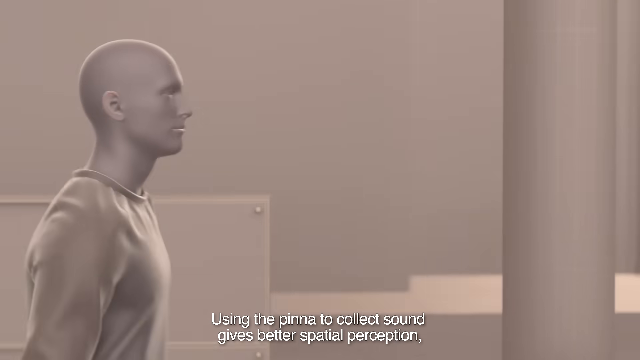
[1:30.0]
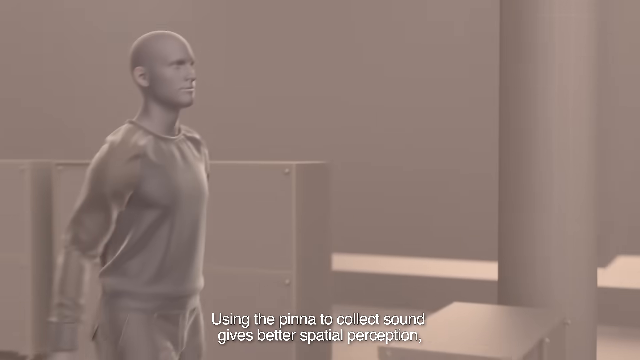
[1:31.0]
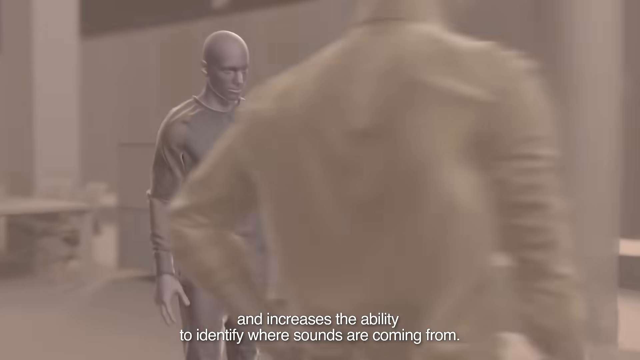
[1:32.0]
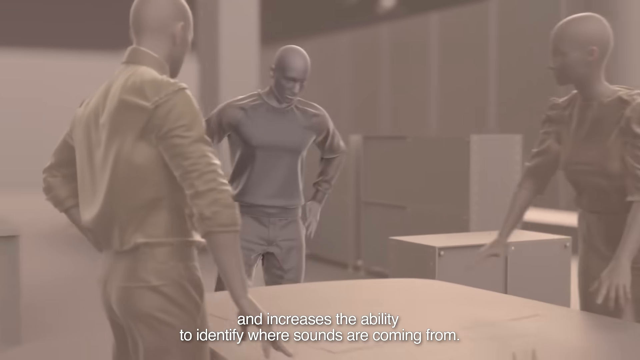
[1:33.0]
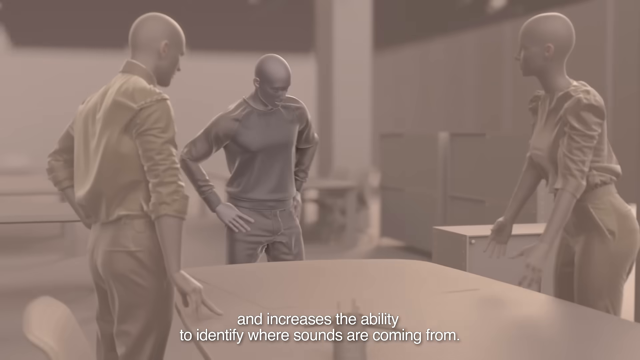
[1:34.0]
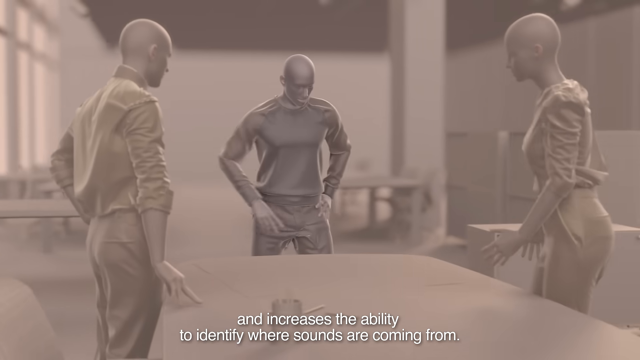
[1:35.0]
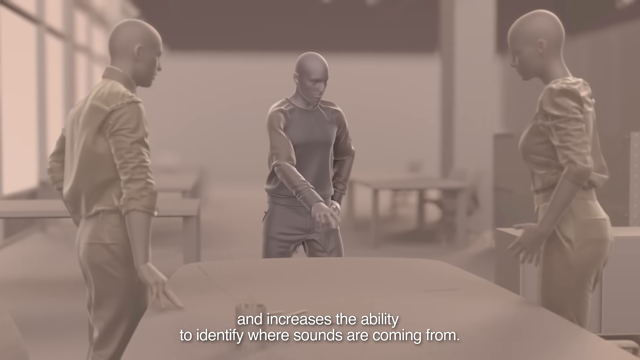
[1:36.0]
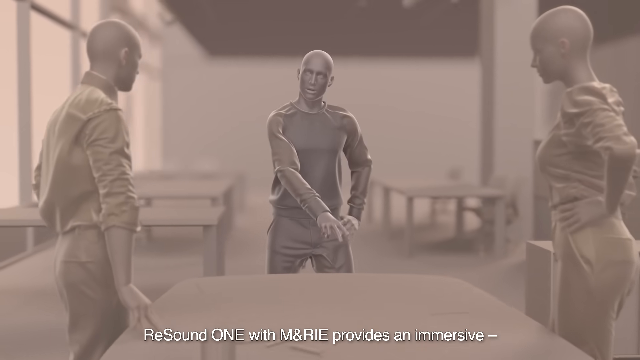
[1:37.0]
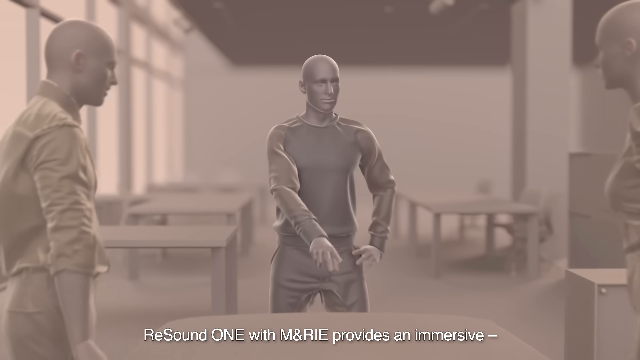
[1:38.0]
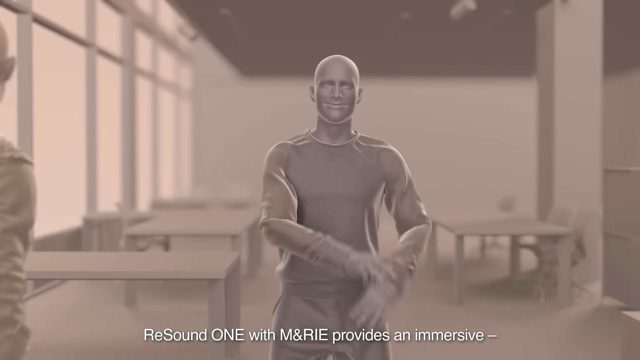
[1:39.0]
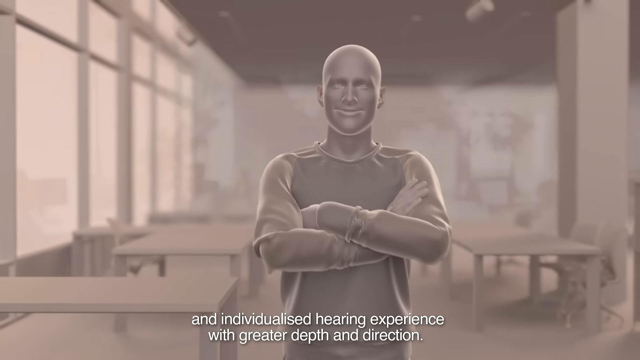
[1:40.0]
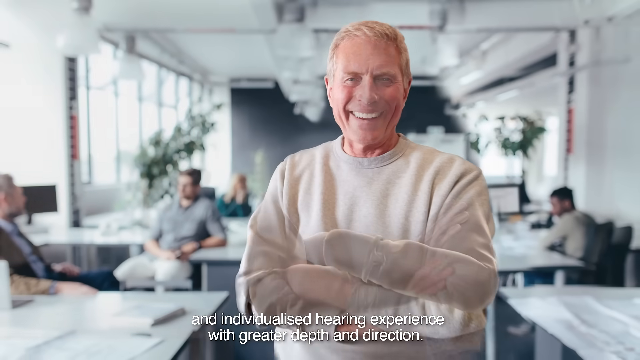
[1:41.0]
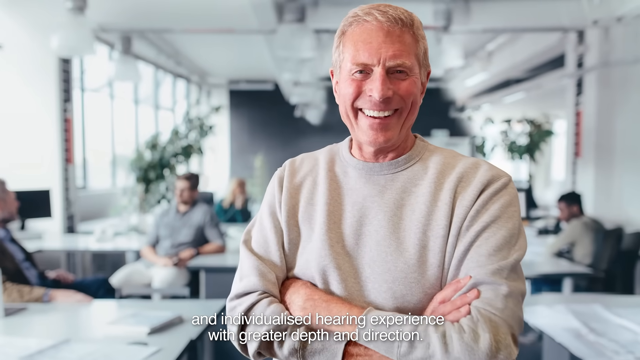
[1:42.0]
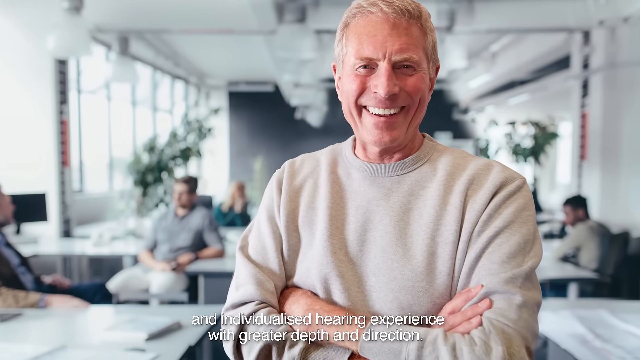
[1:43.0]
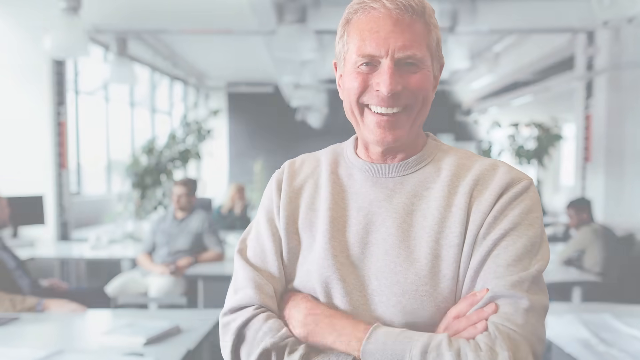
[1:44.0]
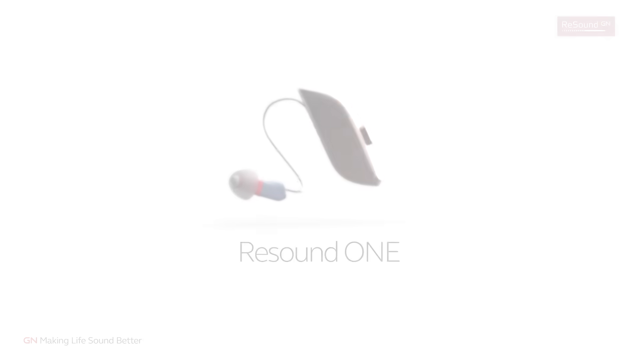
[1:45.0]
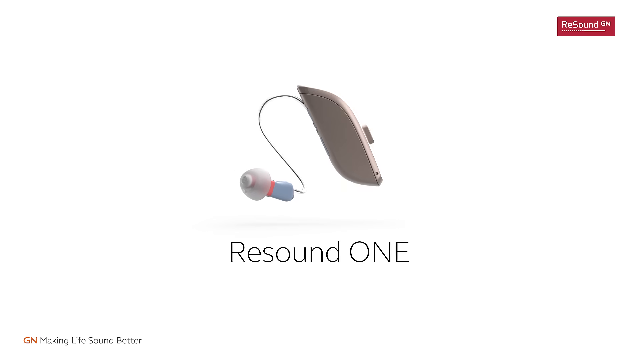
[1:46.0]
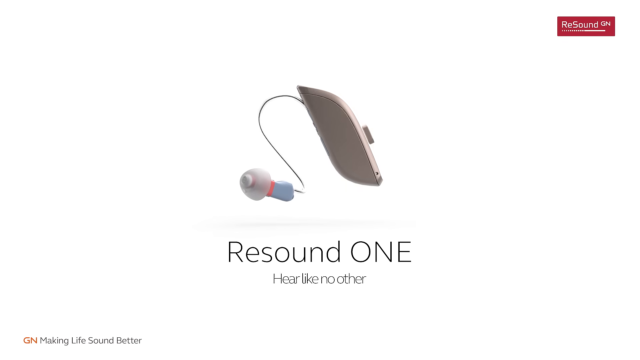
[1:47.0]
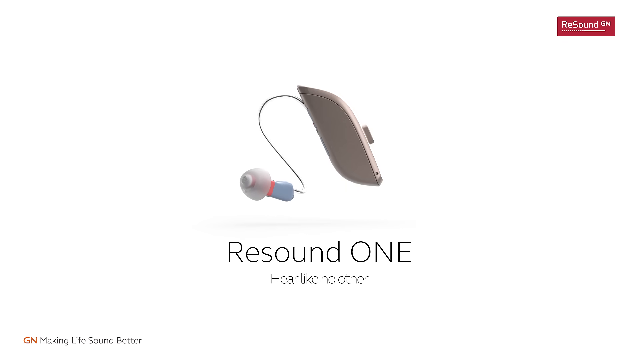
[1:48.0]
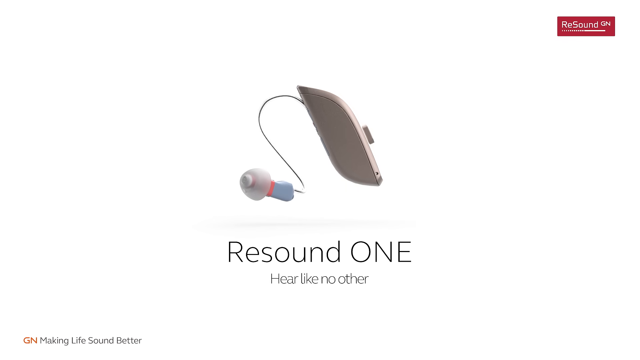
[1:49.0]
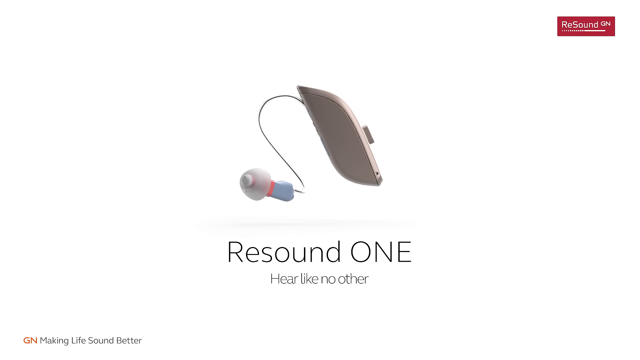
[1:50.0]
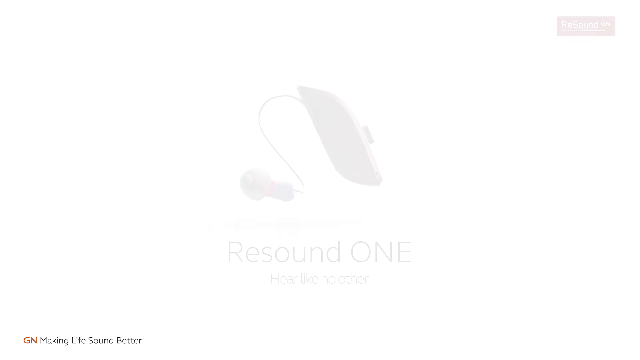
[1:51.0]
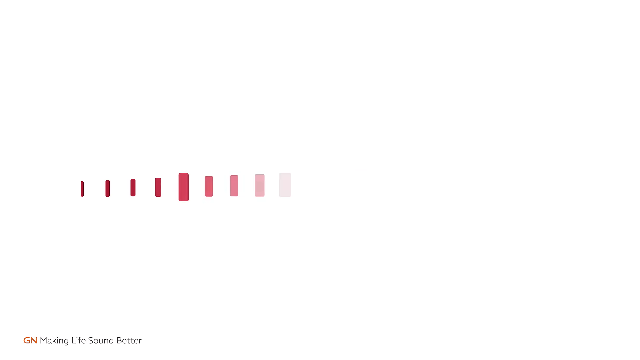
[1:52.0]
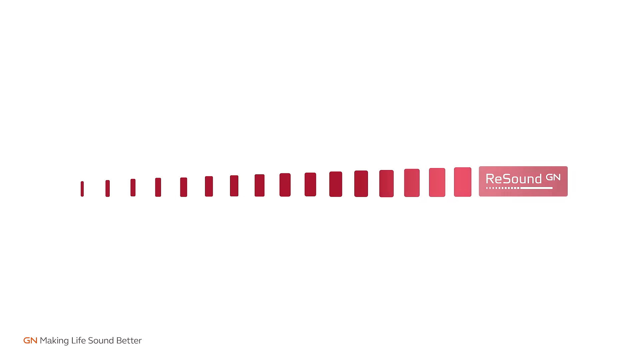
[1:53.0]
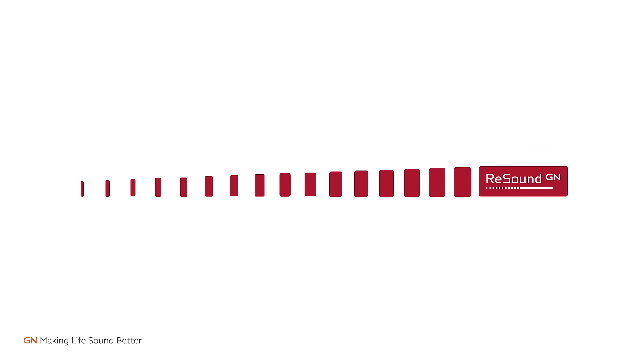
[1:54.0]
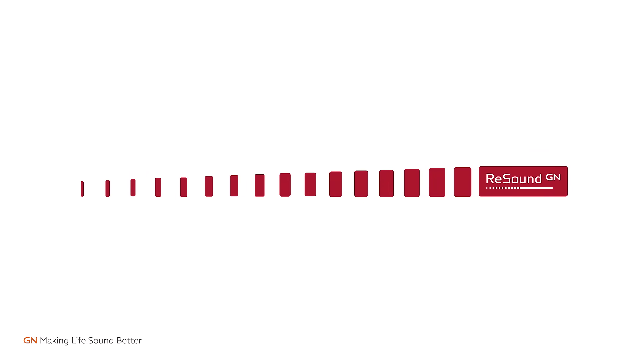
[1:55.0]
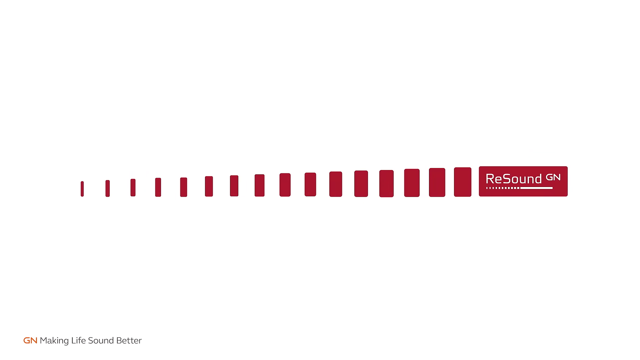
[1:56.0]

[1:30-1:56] An animation shows three people who are seemingly in their workplace. An animated male in the middle approaches the other two around what seems to be a table, points to them and shows them how something is done. He then holds his arms and smiles, and the animation turns into a more realistic-looking animation. The video includes an advert that seems to be for a small electronic device, a hearing aid, from a company called ReSound One, with the slogan "hear like the other". Toward the end it shows a sound-like transmission going from small to largest in increasing volume. In the realistic image, a male seems to be in a workplace together with colleagues; the camera focuses on him, and he is smiling.